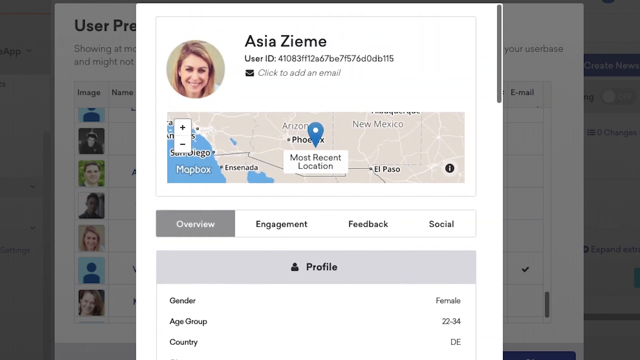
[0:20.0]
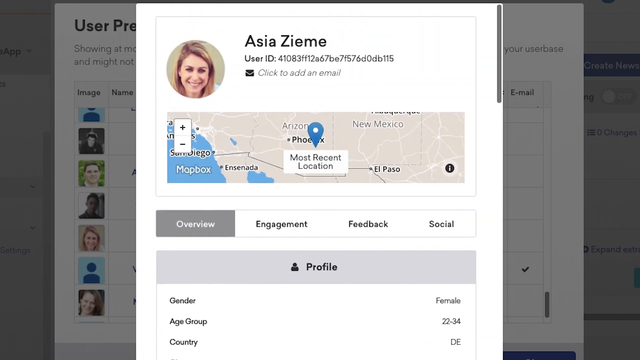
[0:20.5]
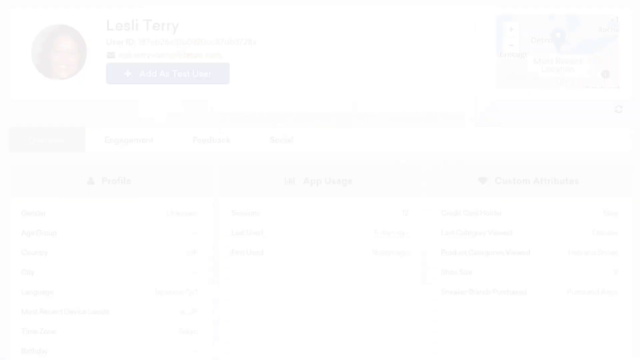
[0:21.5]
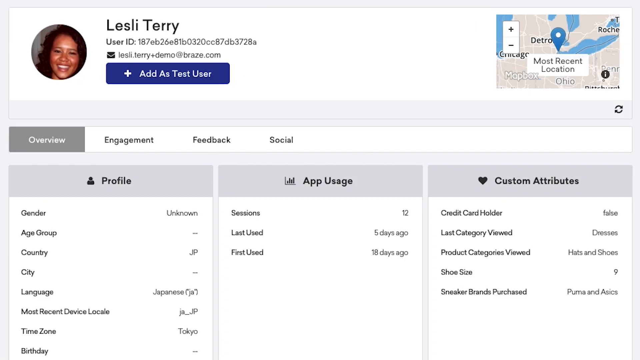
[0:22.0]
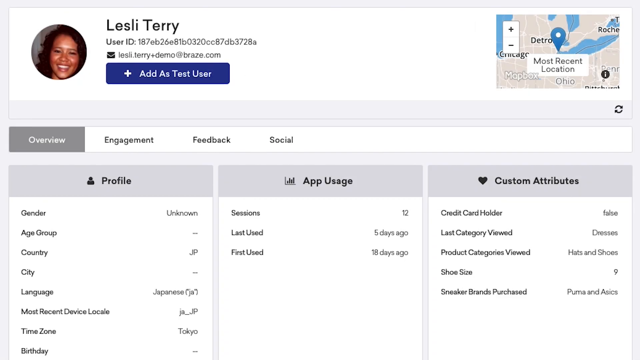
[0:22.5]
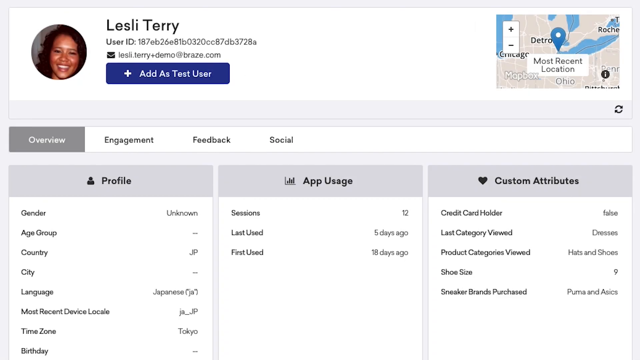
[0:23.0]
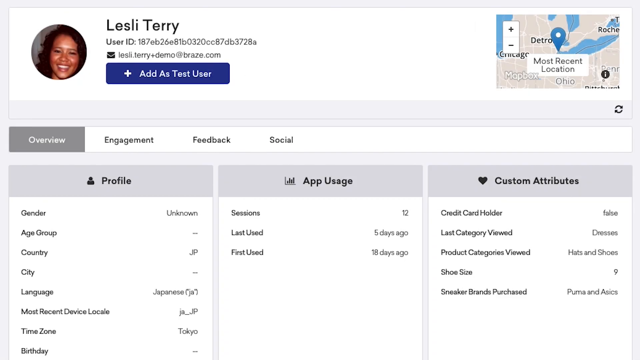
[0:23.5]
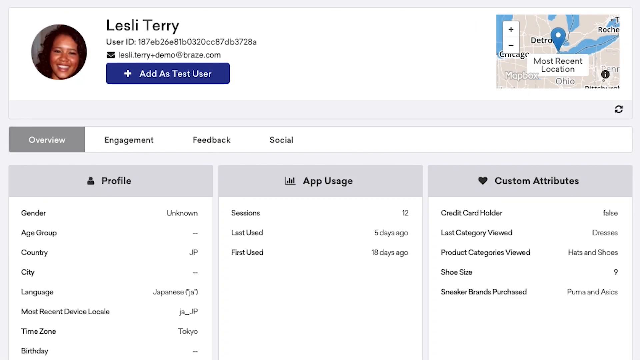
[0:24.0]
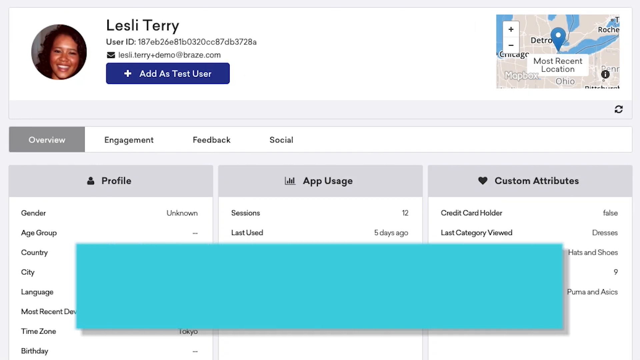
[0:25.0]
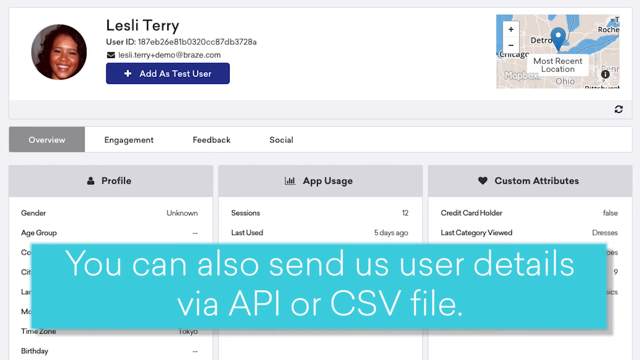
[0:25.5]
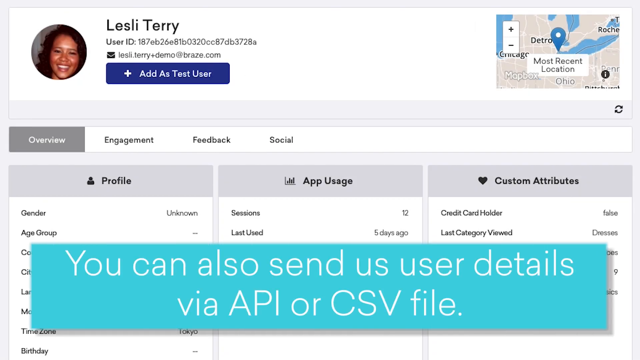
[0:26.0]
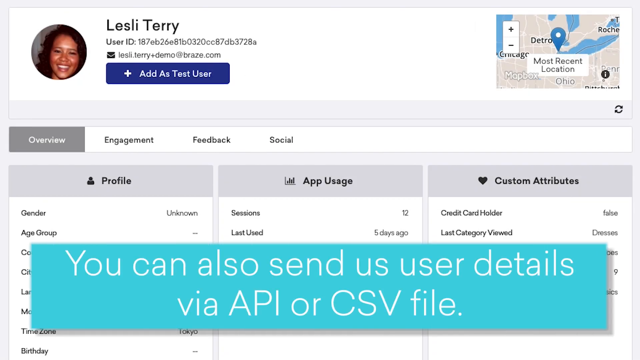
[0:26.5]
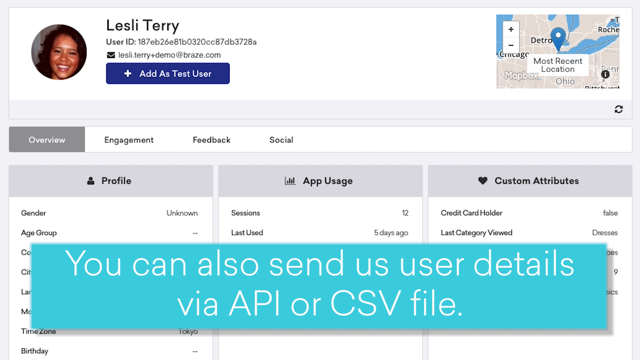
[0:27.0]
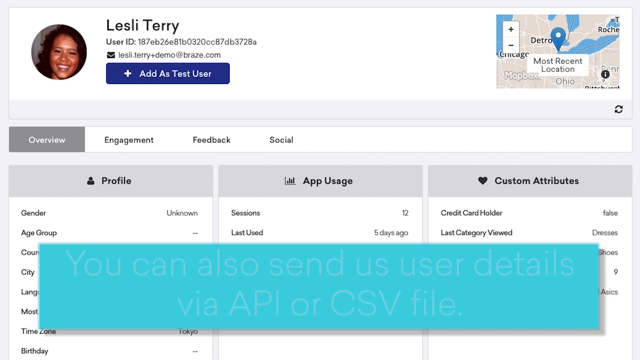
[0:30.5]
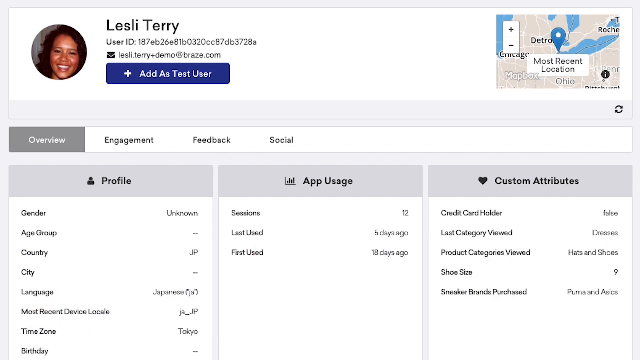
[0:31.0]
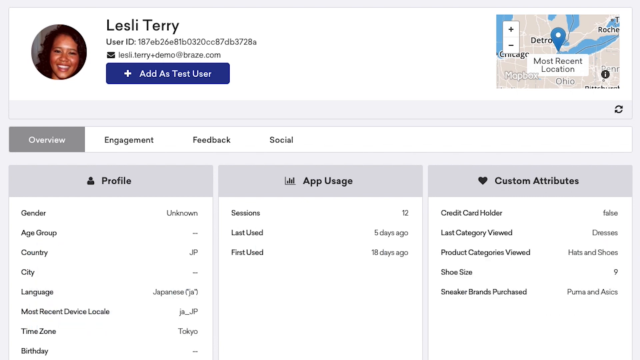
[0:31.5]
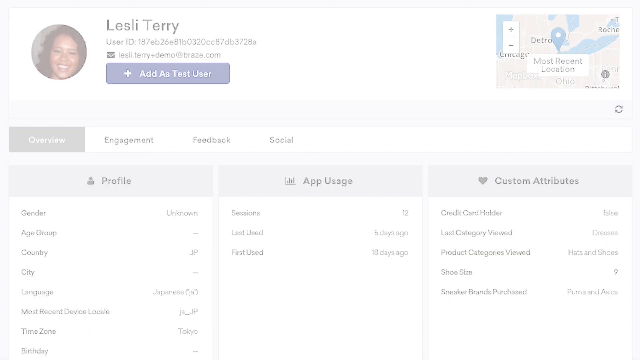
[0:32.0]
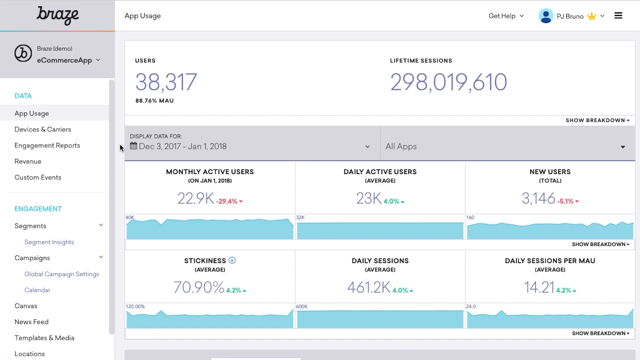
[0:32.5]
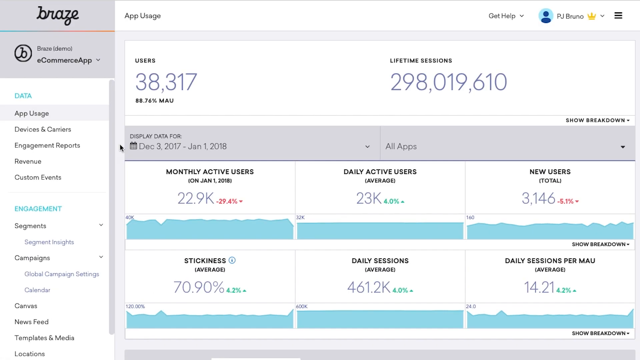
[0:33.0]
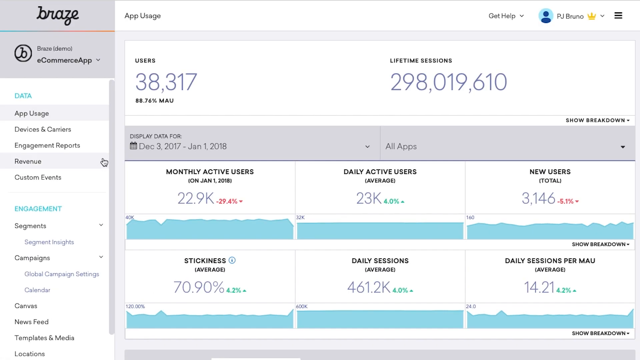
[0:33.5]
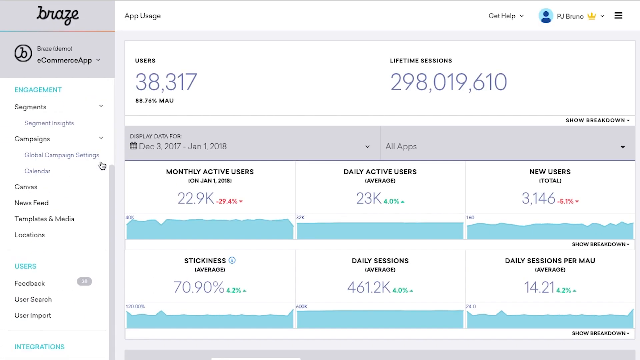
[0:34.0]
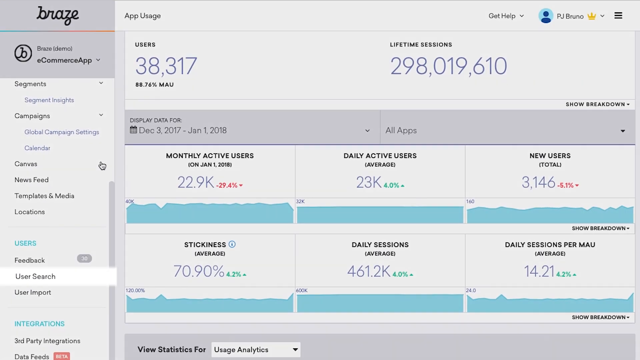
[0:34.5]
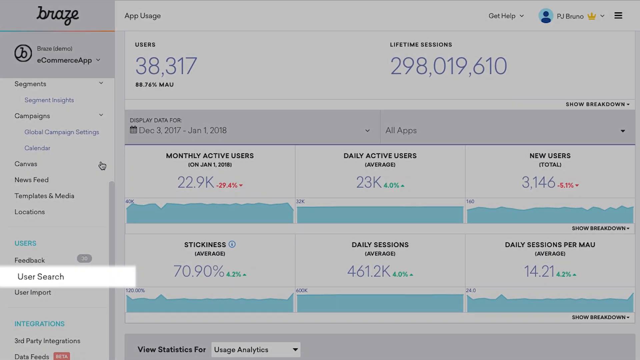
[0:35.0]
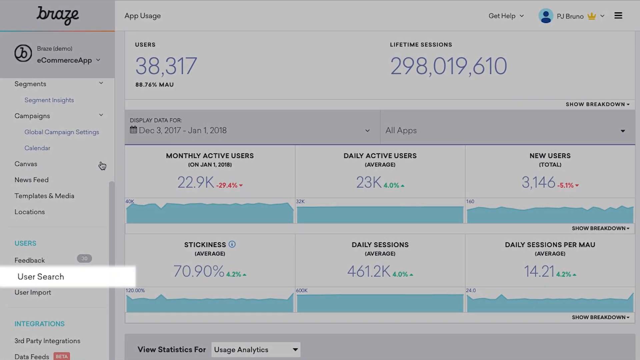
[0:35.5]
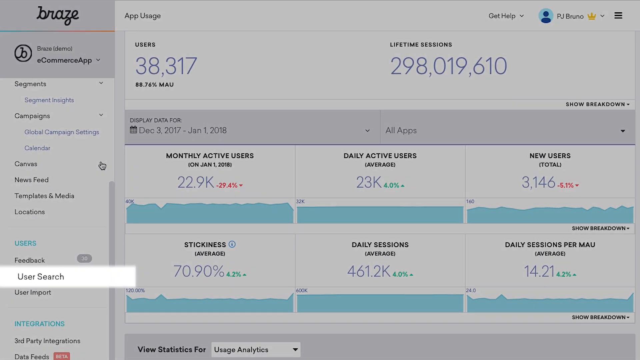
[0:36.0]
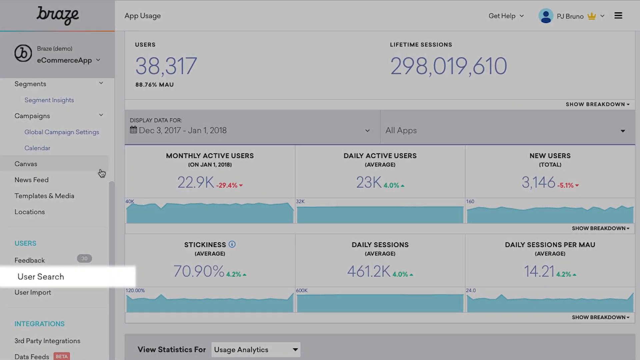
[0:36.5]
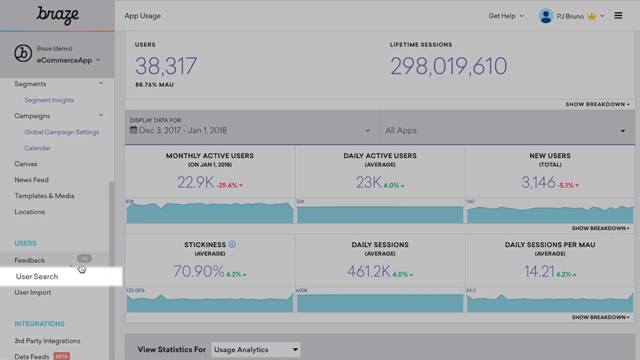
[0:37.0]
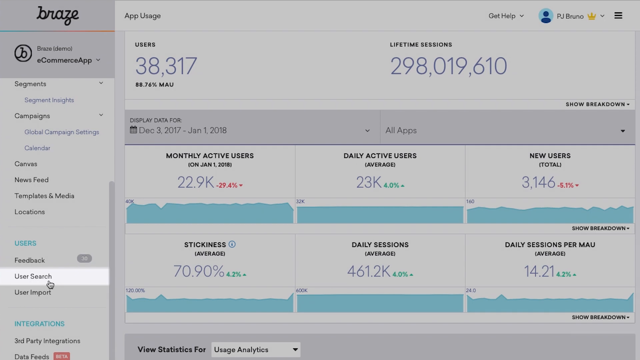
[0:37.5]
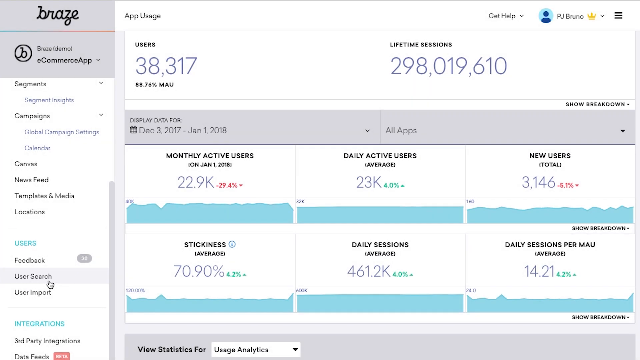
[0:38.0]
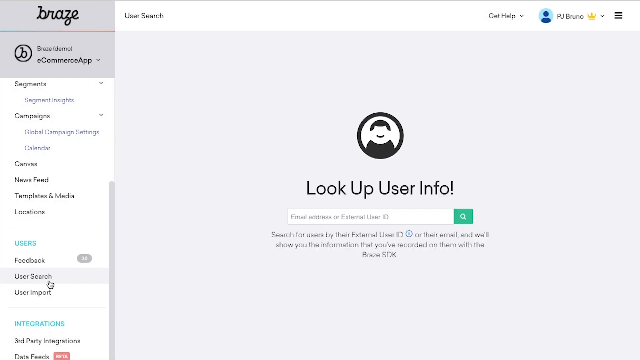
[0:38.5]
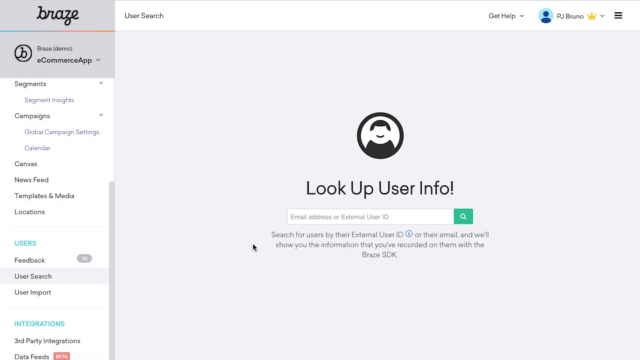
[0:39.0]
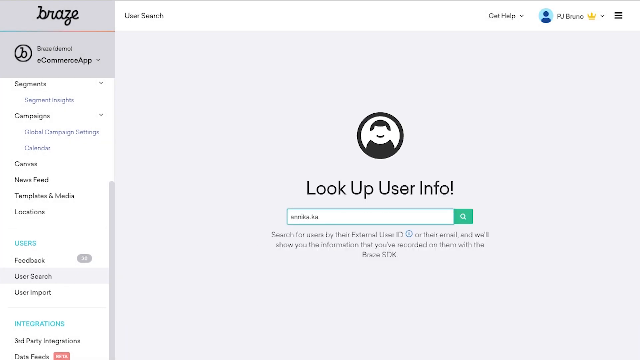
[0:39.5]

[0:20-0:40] A screen that seems to pop up above another app or pages of apps shows the profile of a woman. A circular color photo appears with the name Asia Zieme and her user ID number. To the left, her image shows a pretty young Caucasian woman with blonde hair parted on the side, smiling. Below her is a section of a map with a pin marking her most recent location in the Phoenix, Arizona area, with New Mexico to the right and San Diego, California to the left. Below the map are buttons set against a white background: "overview" on the left is currently open, shown pressed in gray, and to the right are "engagement," "feedback" and "social." Below those is a very light gray banner with the word "profile" in black text.